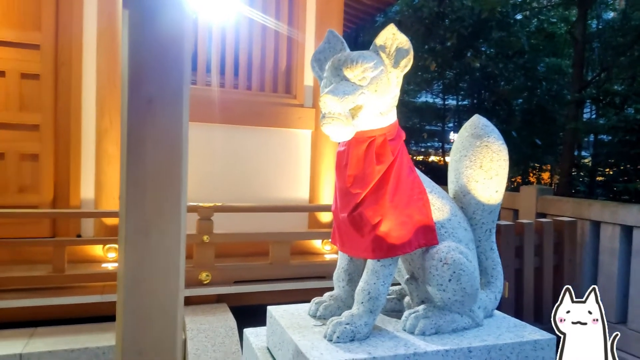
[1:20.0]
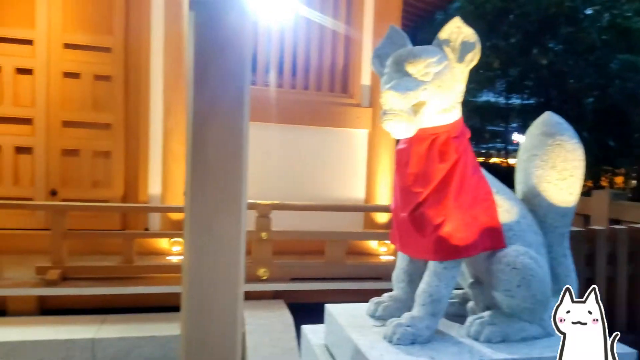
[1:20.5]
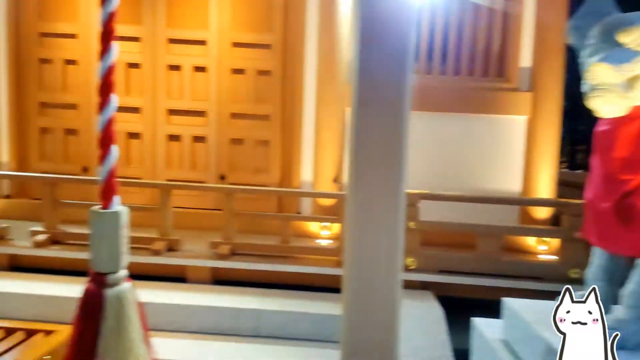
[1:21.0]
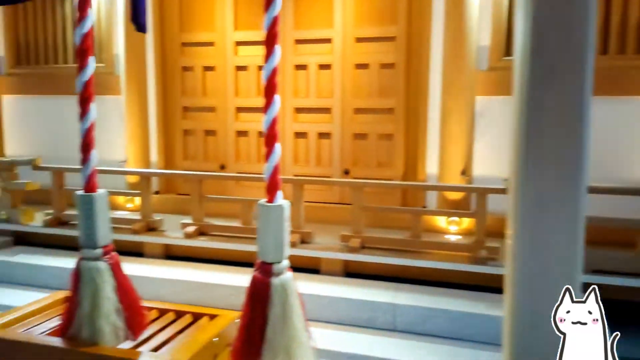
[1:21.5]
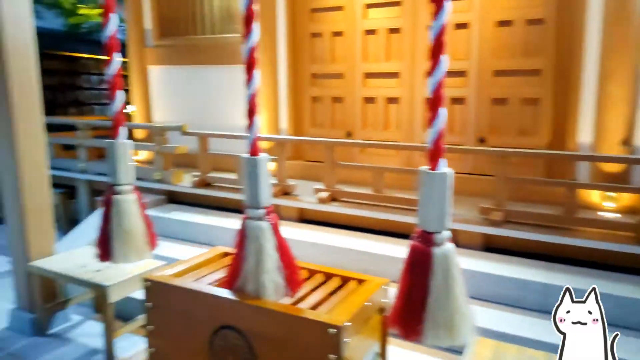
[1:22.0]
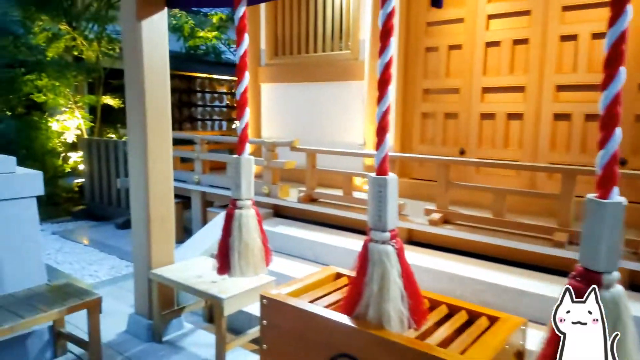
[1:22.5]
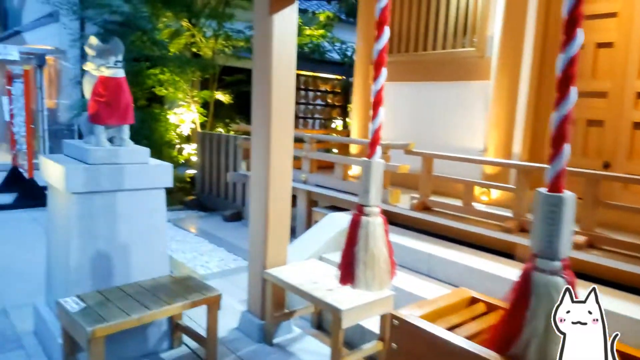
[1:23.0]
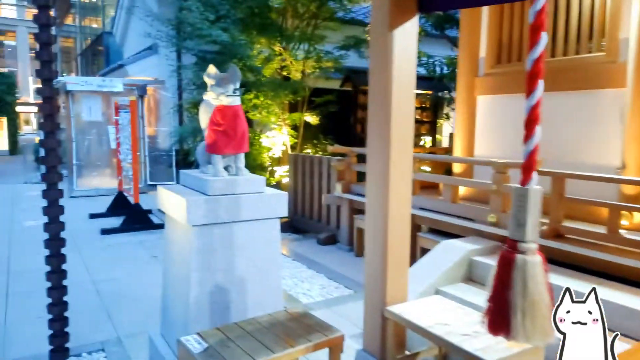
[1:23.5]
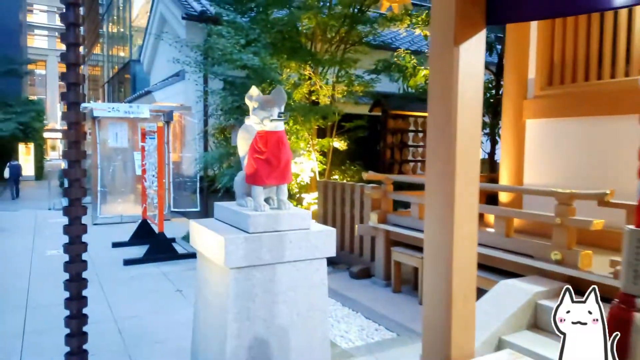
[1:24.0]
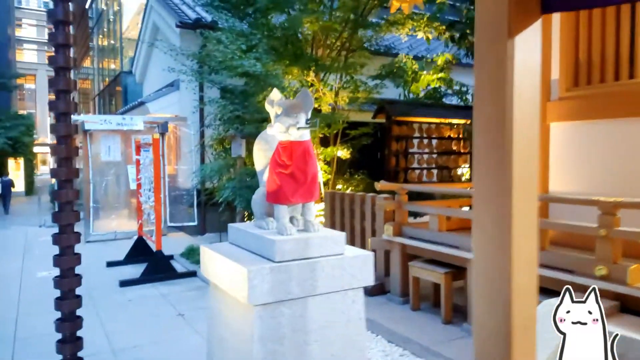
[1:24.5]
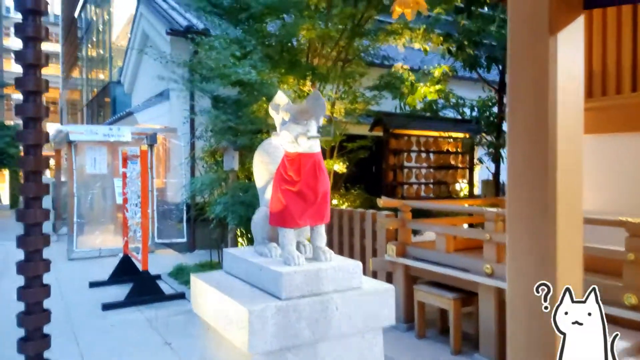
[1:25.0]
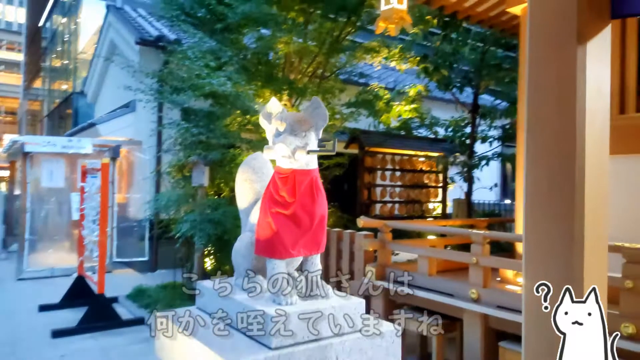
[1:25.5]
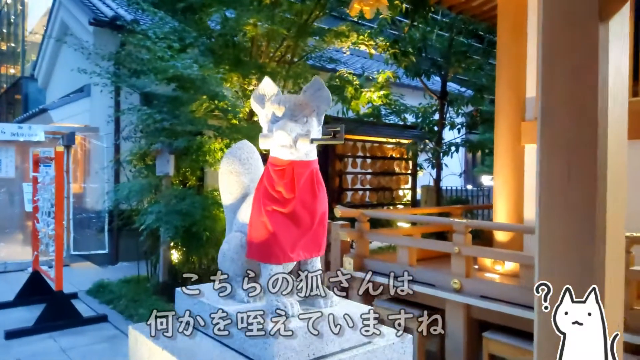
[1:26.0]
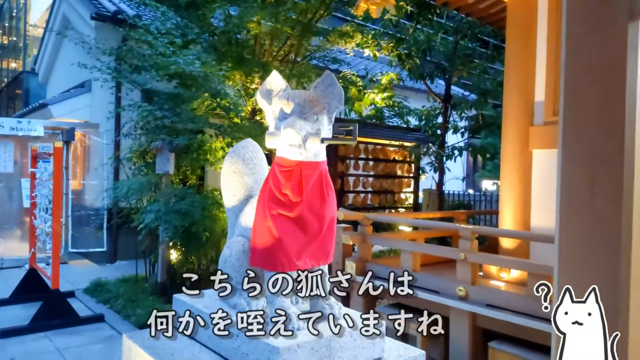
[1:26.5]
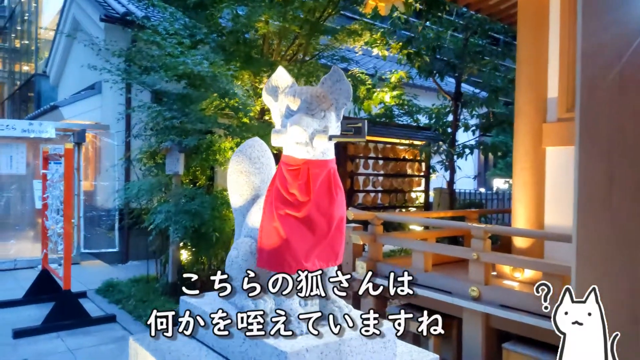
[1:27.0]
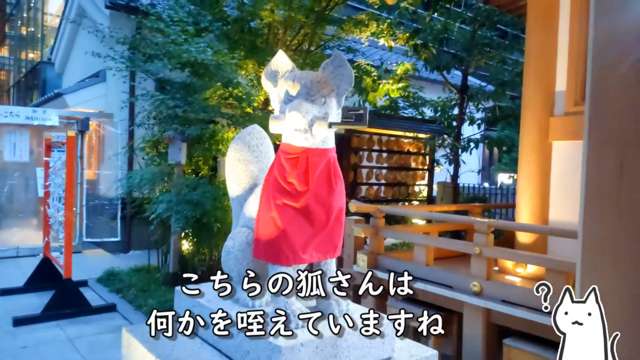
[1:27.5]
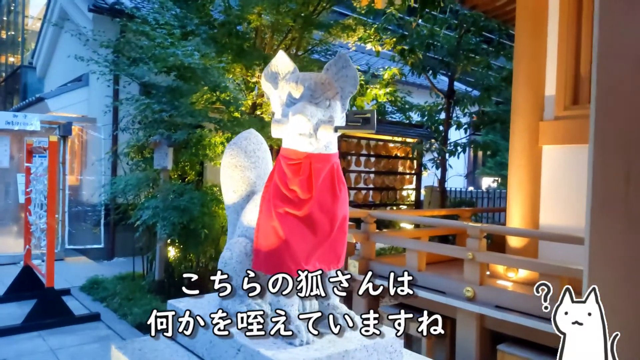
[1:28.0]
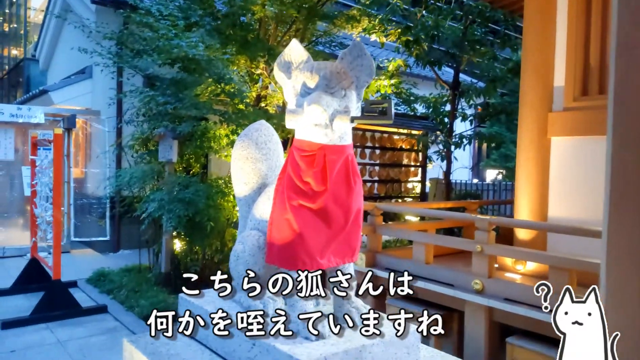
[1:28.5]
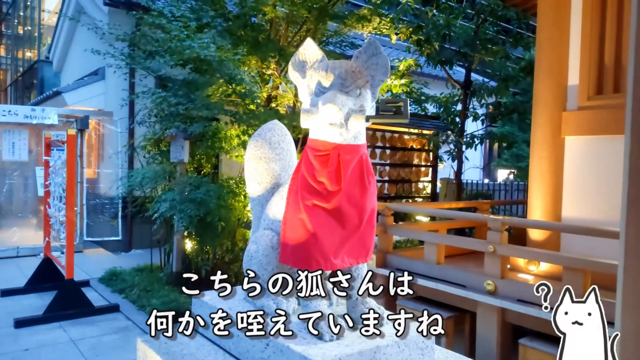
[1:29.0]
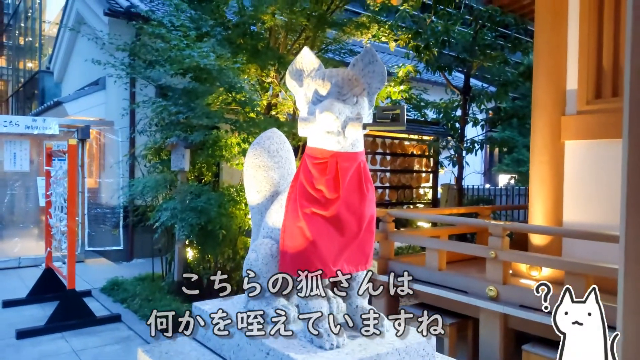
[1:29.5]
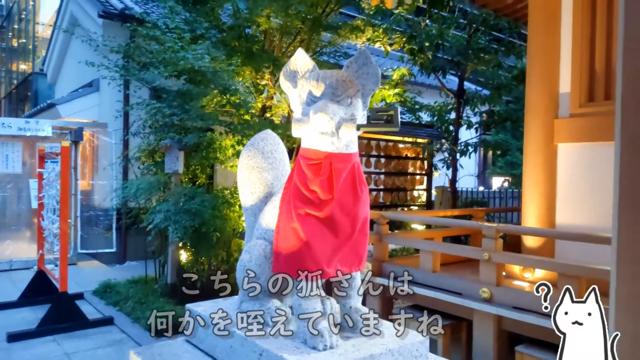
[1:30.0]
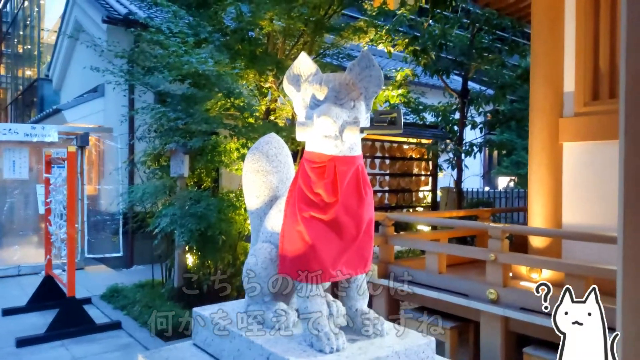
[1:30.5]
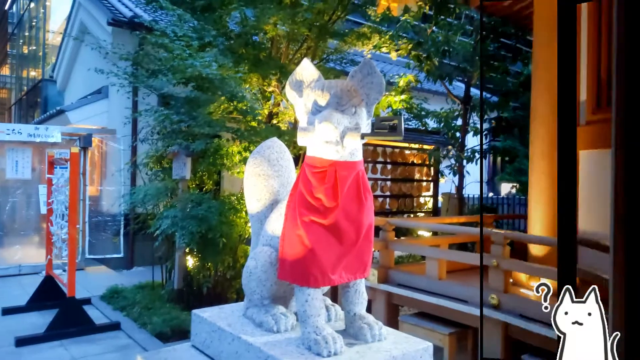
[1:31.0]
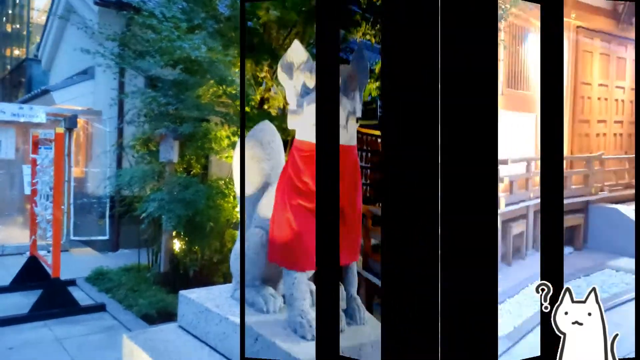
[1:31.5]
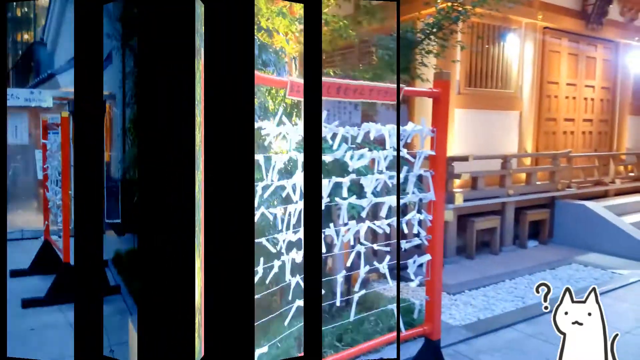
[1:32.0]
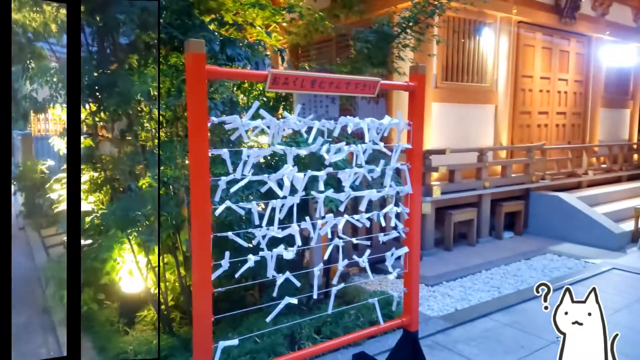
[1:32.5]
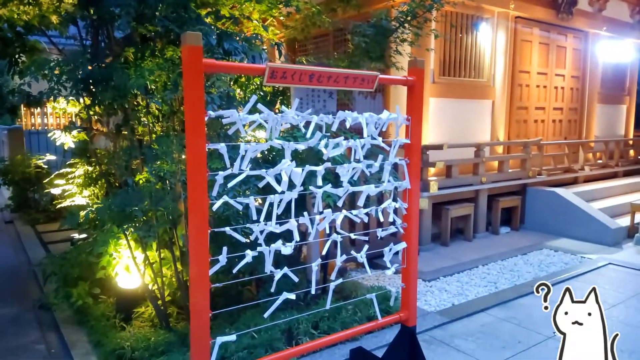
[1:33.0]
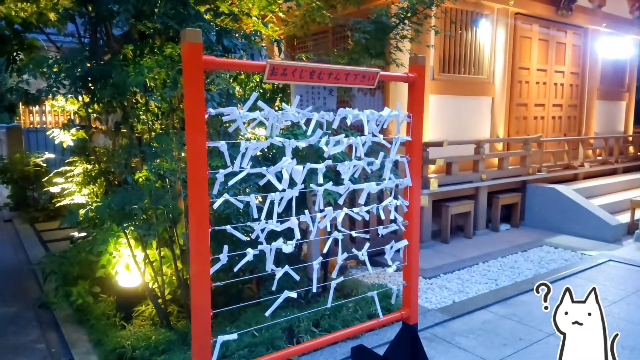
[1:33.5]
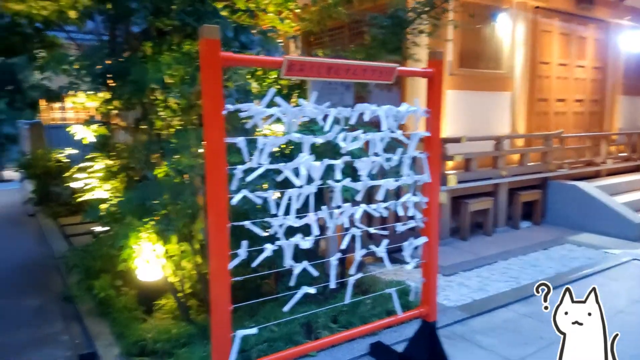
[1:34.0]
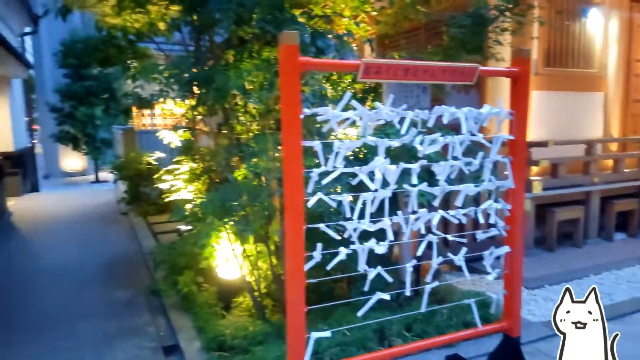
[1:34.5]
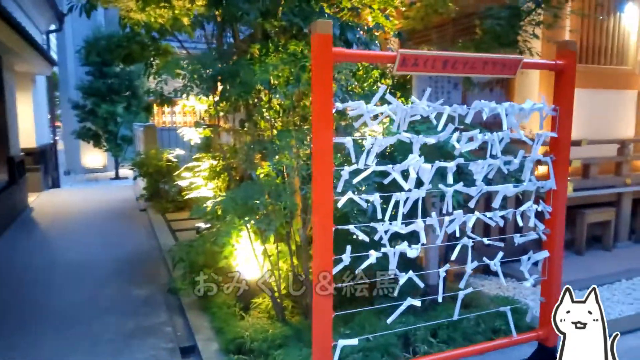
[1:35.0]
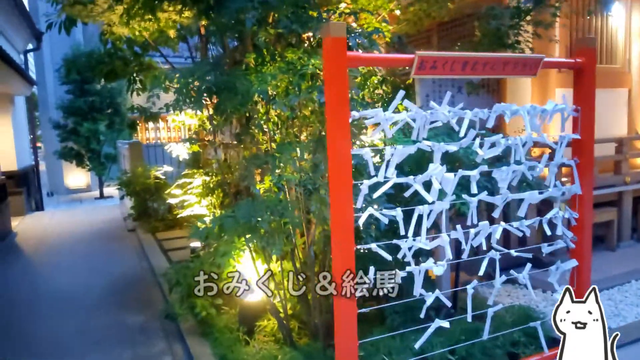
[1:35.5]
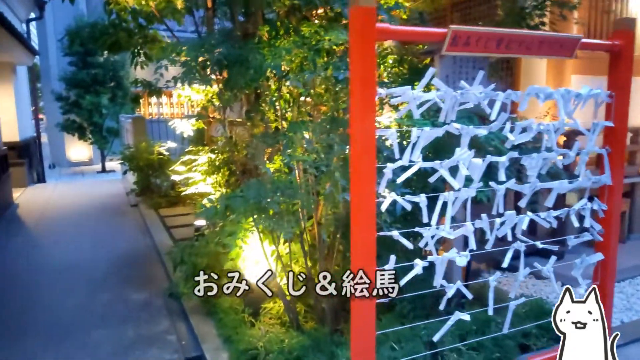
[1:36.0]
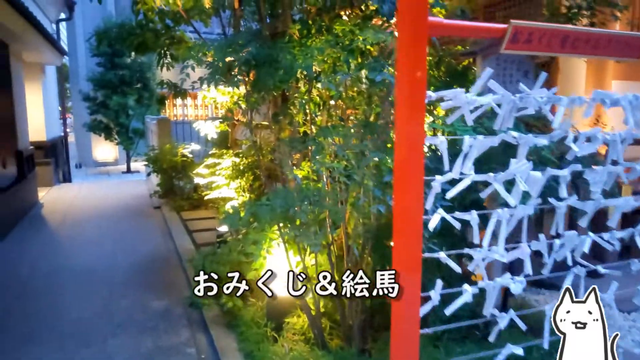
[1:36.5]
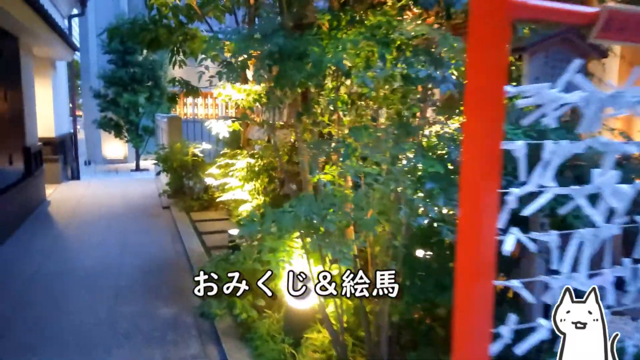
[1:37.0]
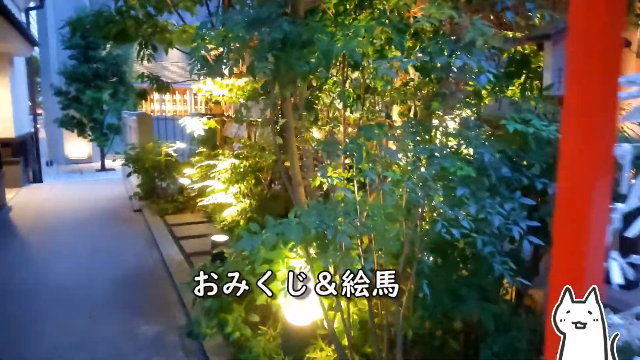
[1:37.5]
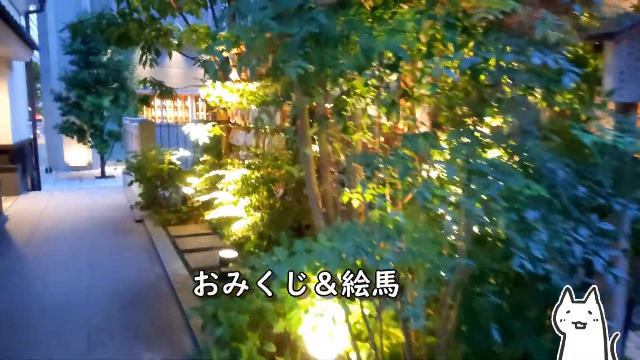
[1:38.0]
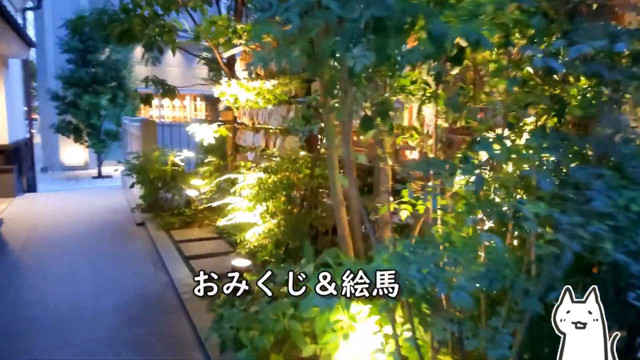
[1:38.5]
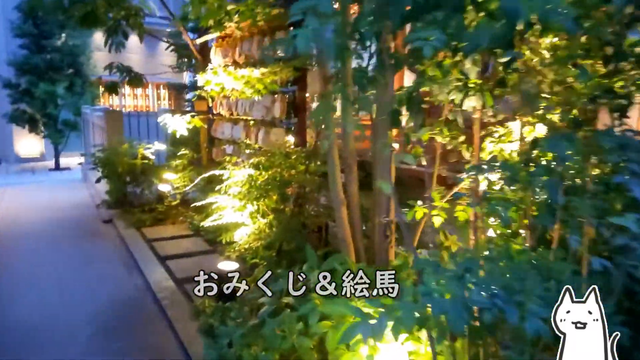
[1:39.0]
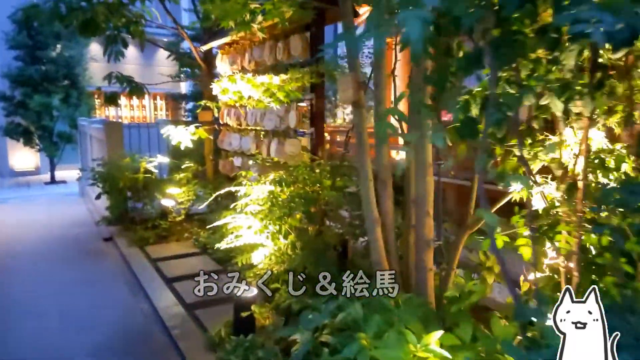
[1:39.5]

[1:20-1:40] The observer focuses on the cat statues mounted on either side of the front of the gazebo; the cats look to be growling as if angry. The focus moves to the left cat, which appears to have something in its mouth, a metal-like structure. The view then passes a structure that seems to be made of metal, with a red frame and several layers and rows of string, with fabric tied to each string; there are possibly ten of these. The observer then heads down the left side of the gazebo. The gazebo has some see-through glass windows, and more of the office buildings that flank all the areas around the gazebo are visible. The cat-like statues seem to have a type of calico print, with a black-and-white spotted appearance: mostly white with some black-gray dots.